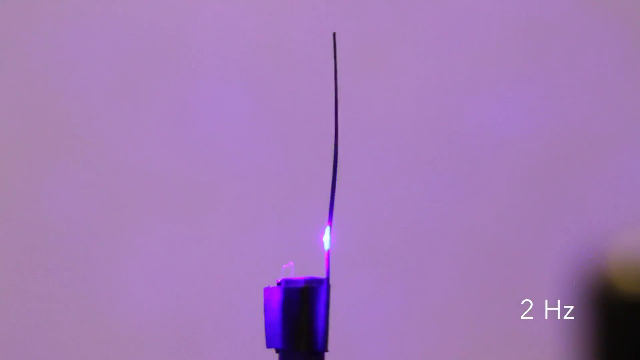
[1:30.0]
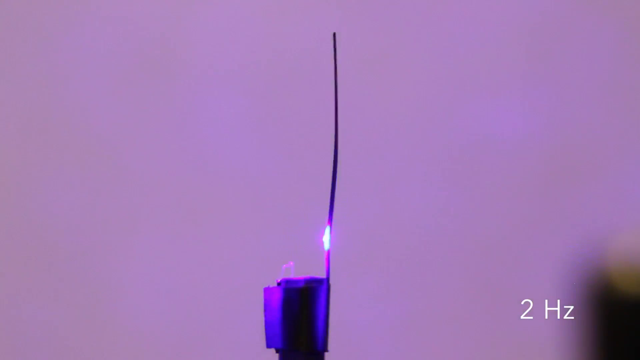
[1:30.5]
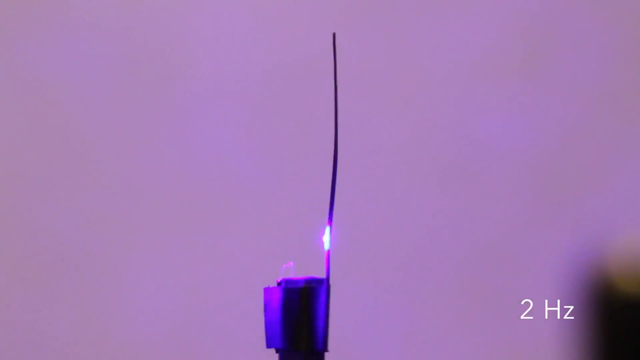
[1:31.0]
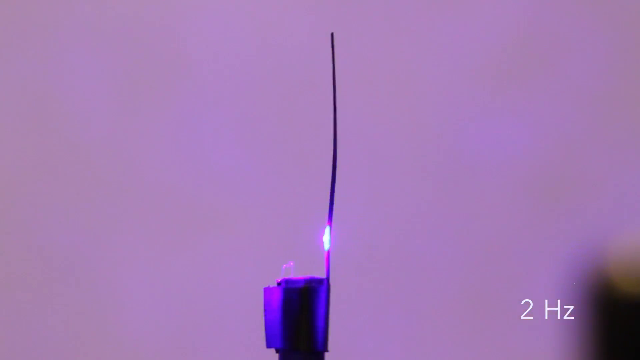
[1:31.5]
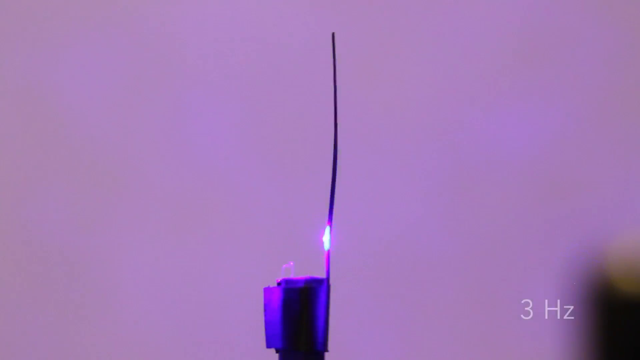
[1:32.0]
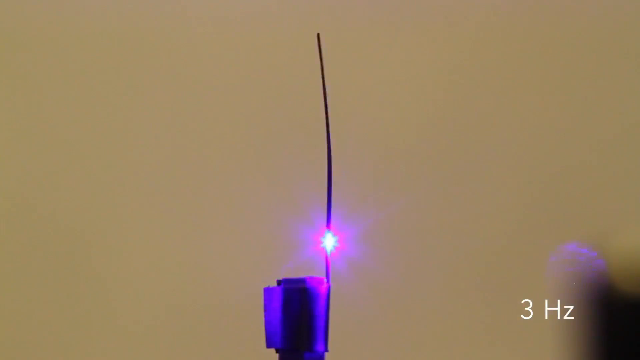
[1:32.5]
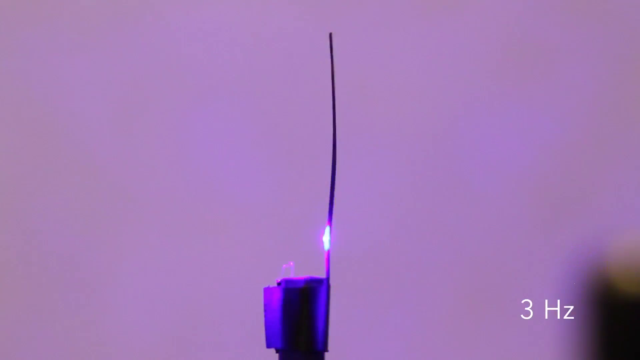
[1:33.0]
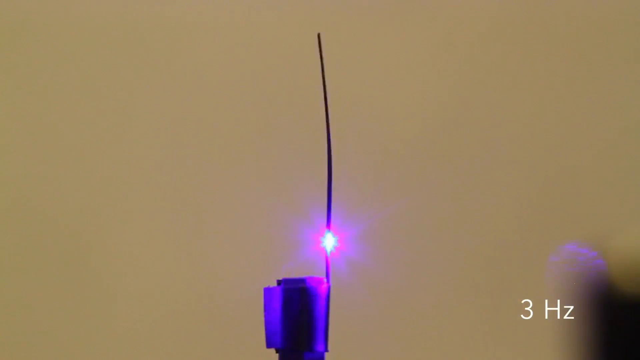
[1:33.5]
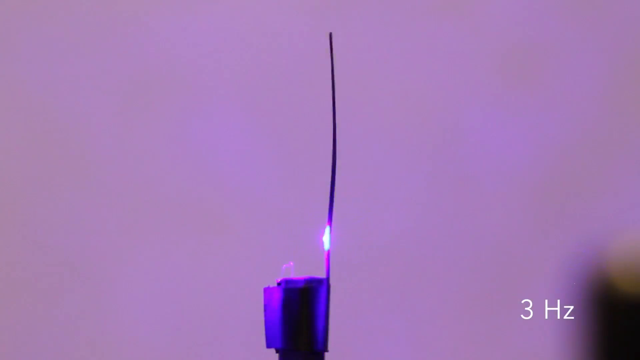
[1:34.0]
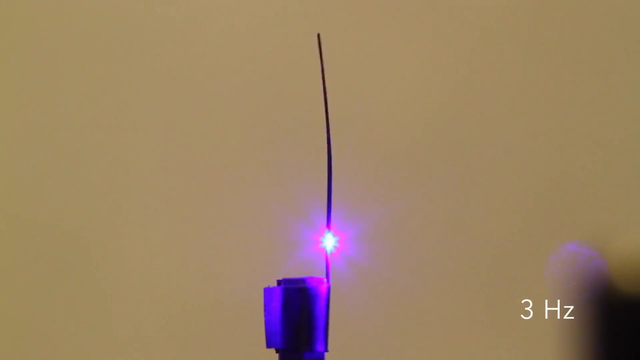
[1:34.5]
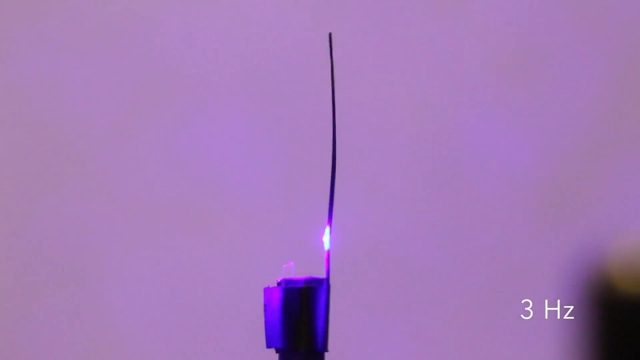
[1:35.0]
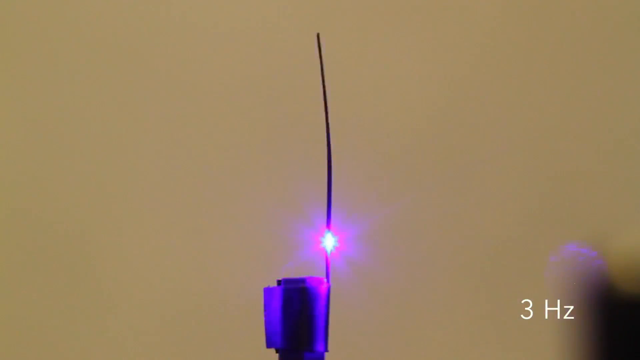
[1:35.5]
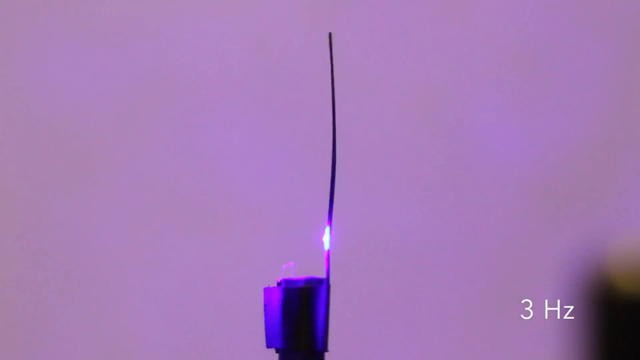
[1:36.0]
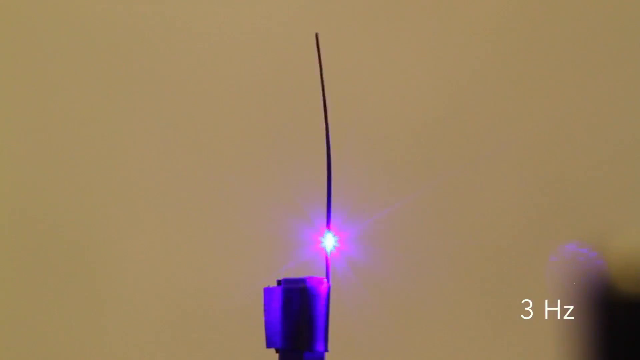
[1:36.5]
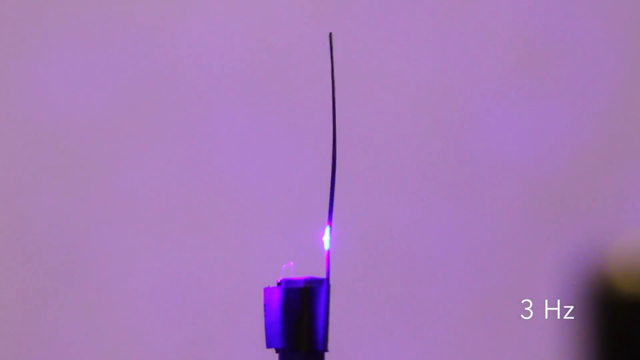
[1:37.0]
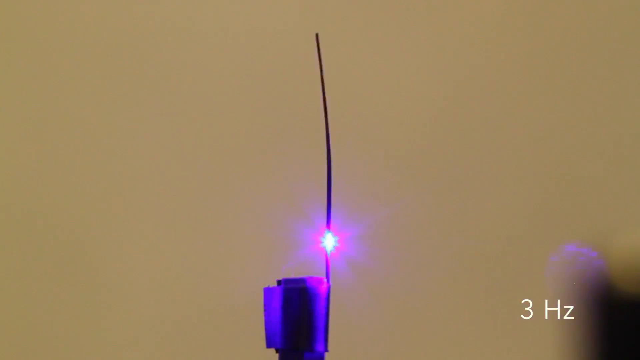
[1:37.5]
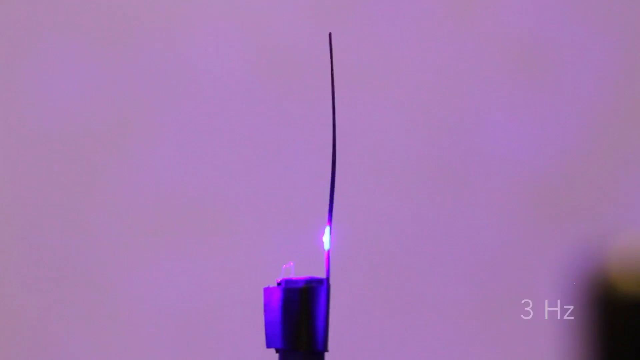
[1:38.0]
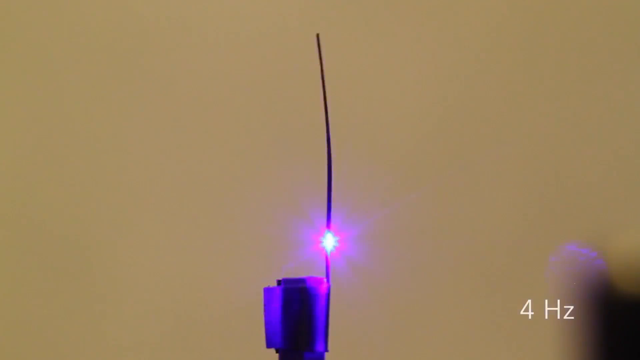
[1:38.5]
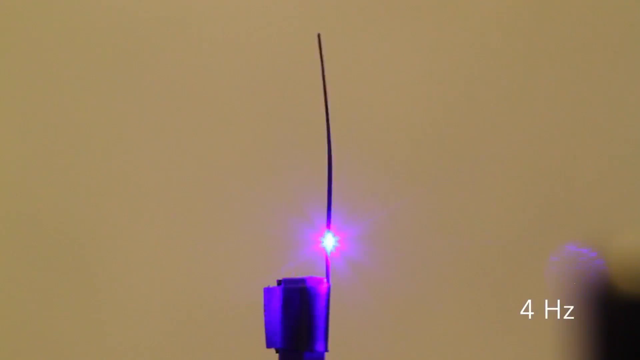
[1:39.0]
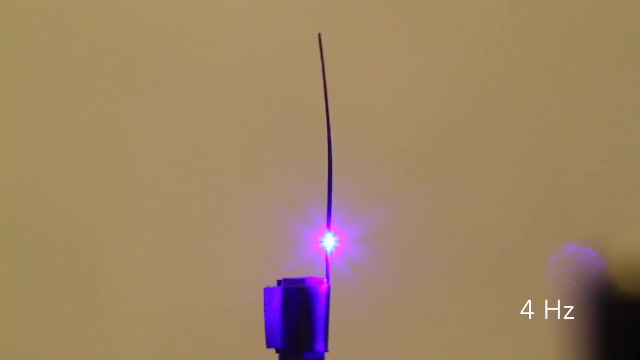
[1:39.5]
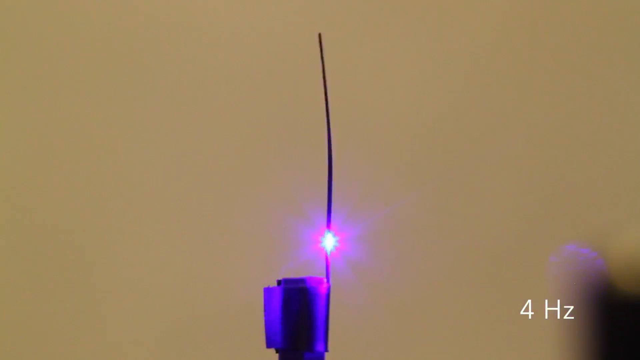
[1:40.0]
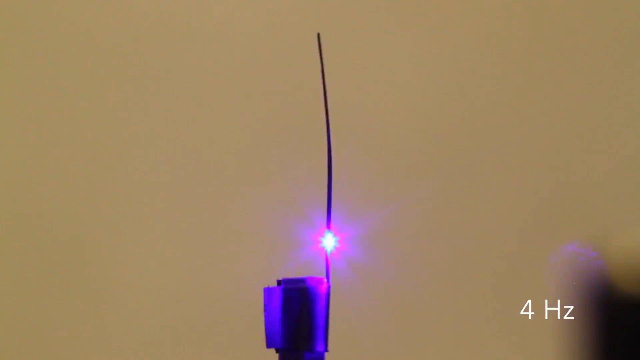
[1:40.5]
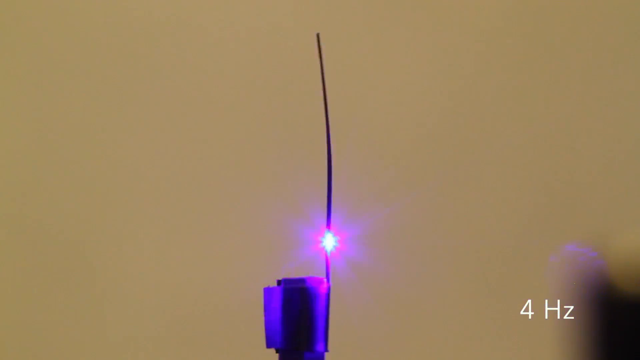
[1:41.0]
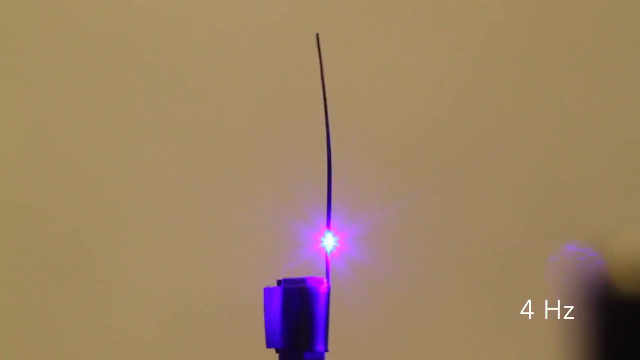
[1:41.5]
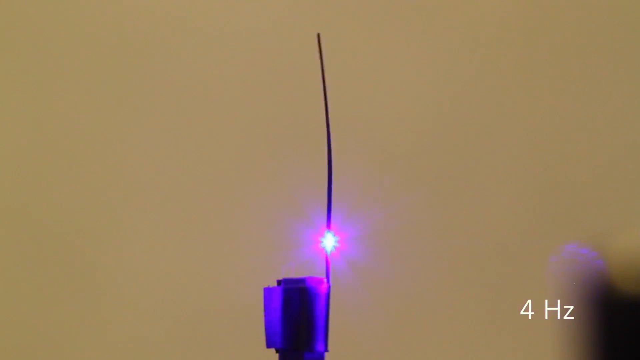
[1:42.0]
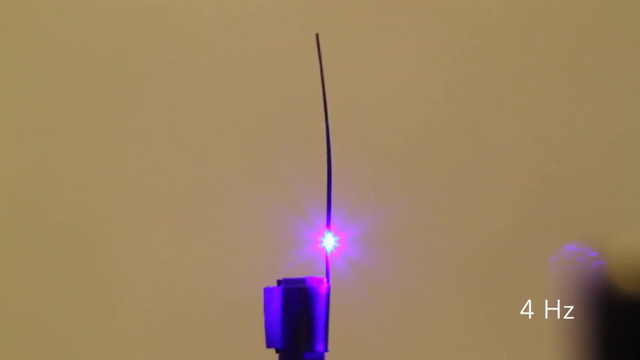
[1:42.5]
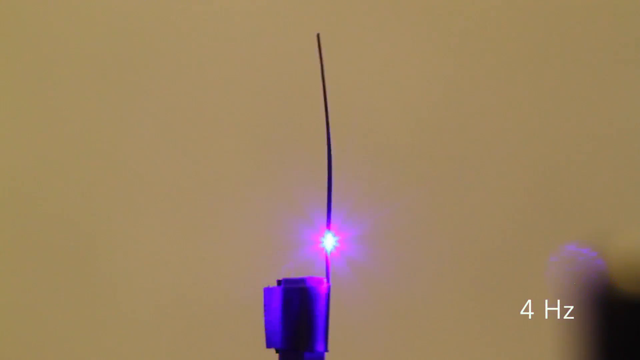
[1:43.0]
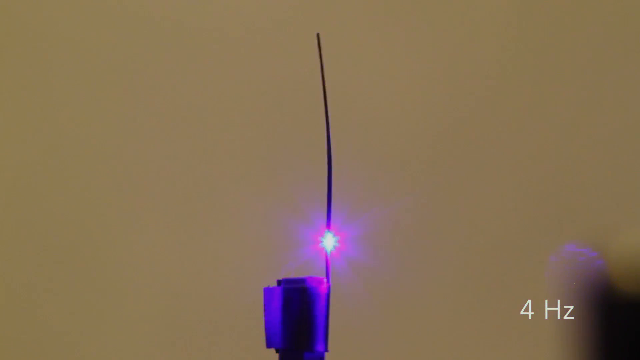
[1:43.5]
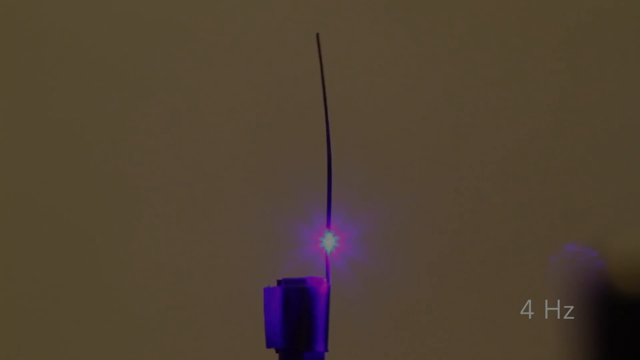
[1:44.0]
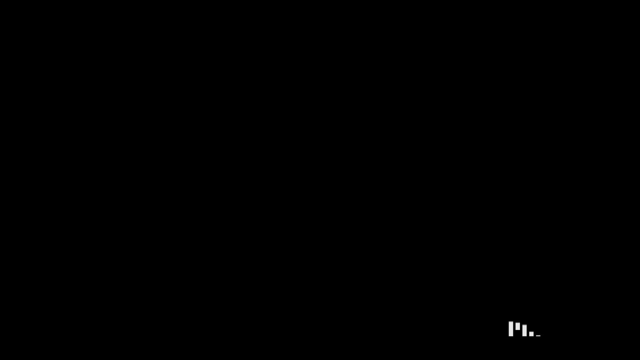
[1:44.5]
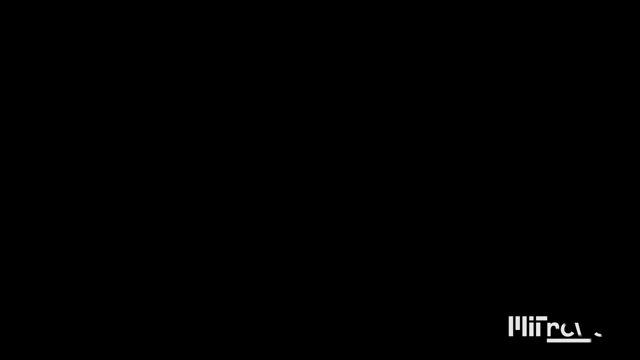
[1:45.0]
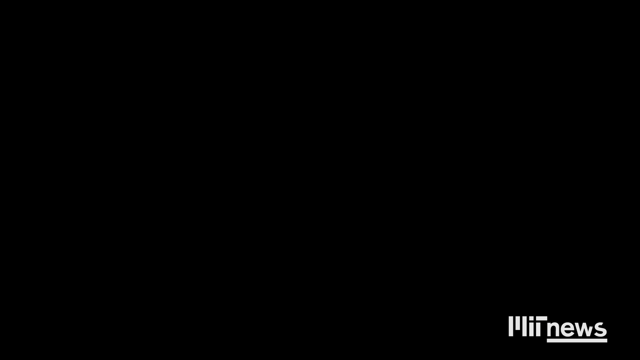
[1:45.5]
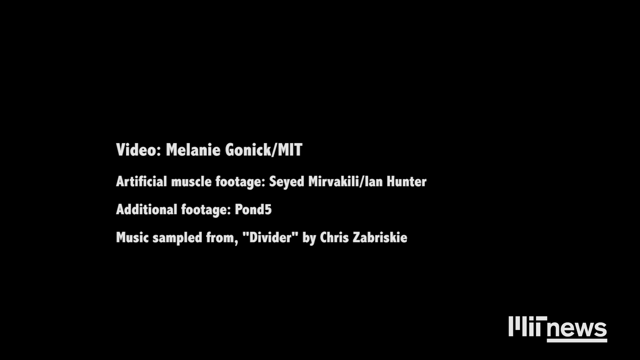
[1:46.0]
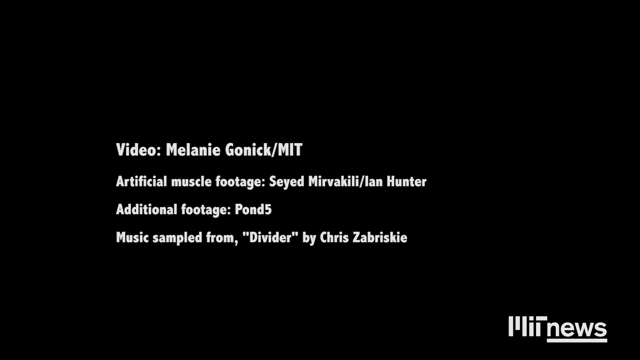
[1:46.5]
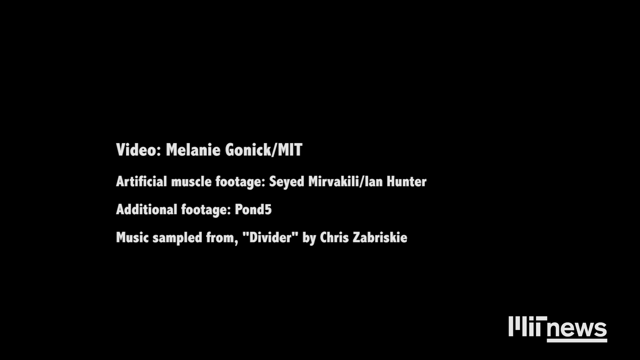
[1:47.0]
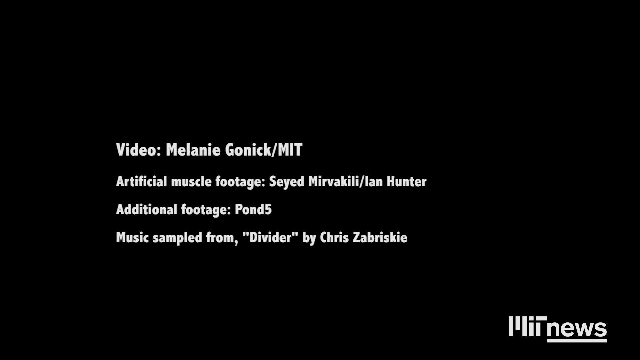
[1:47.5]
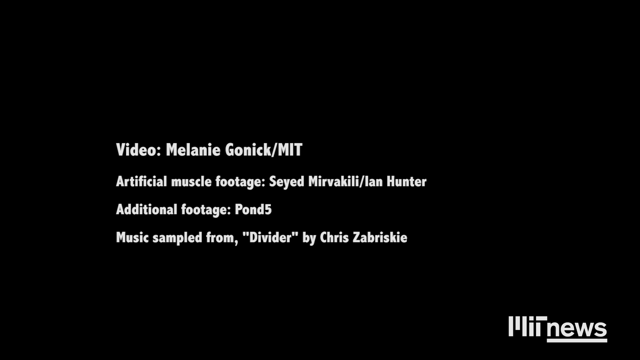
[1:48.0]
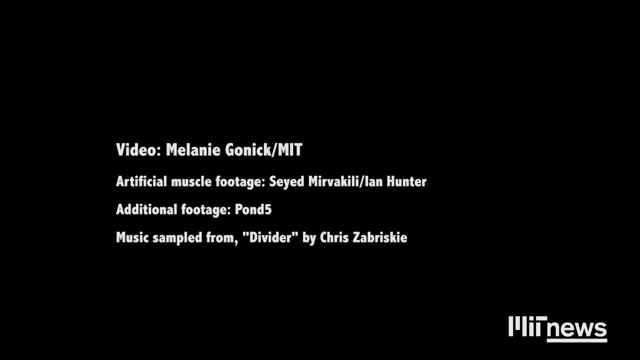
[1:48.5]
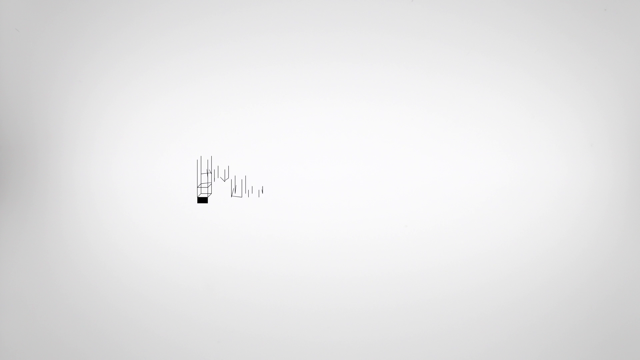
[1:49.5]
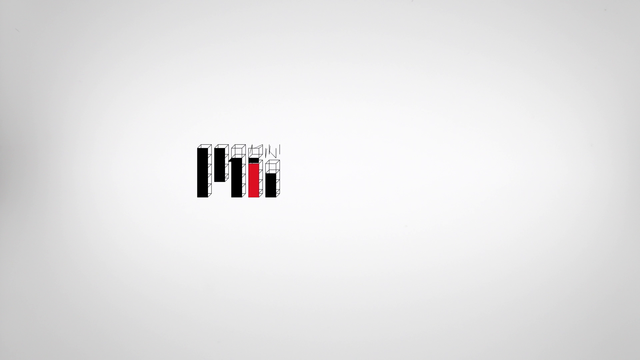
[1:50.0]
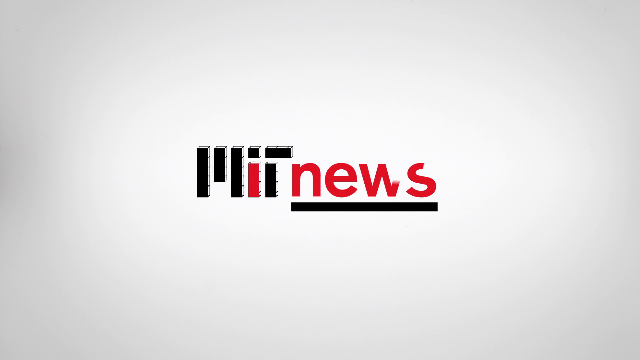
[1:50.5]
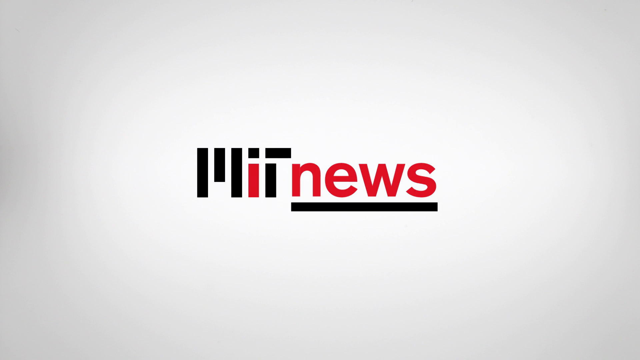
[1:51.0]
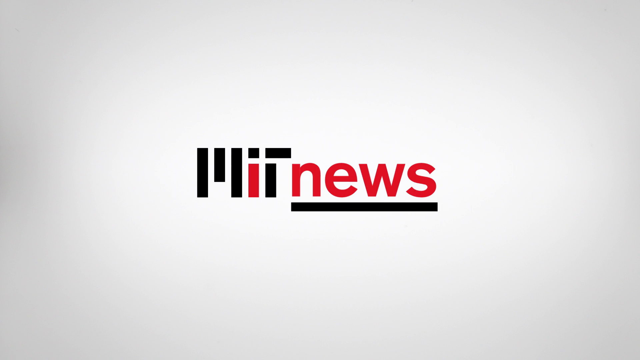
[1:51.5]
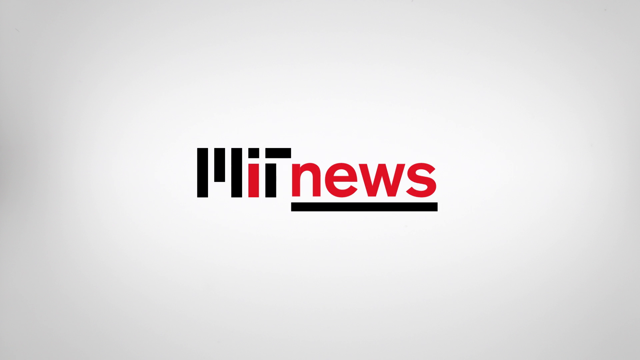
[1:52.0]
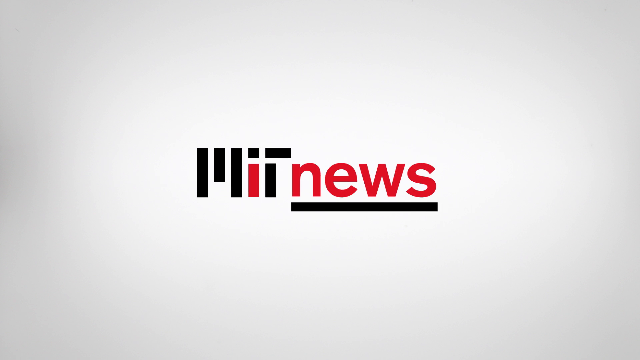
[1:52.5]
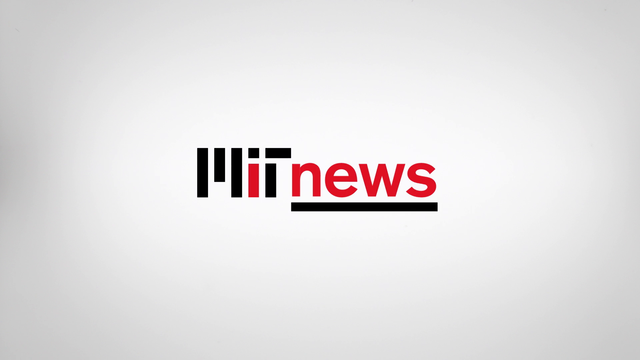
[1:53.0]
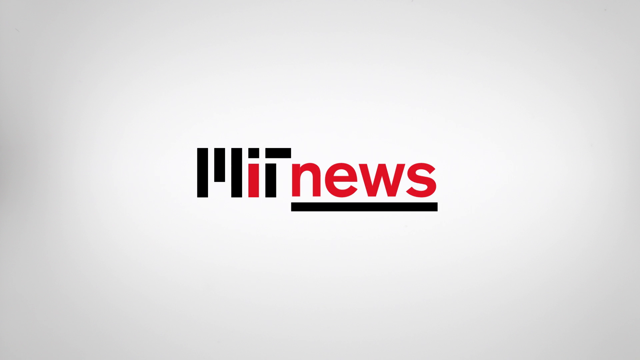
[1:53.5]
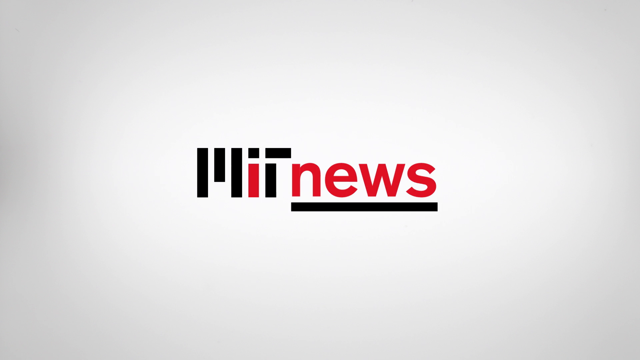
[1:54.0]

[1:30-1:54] Against a purple background is something with a black base and a much thicker string-like strand that is kind of moving back and forth. A blinking light is toward its base, bright enough that it is kind of casting shadows on the wall behind it. The screen then goes black, and white text lists credits including "video", "Melanie Gonic", "MIT", "Syed Maviri", "Ian Hunter", "additional footage", "Pond 5" and "Chris Zabriskie", with the news logo in the bottom right corner. The screen then goes white, and the news logo appears again, now centered and in black and red: "news" is red with a black line under it.